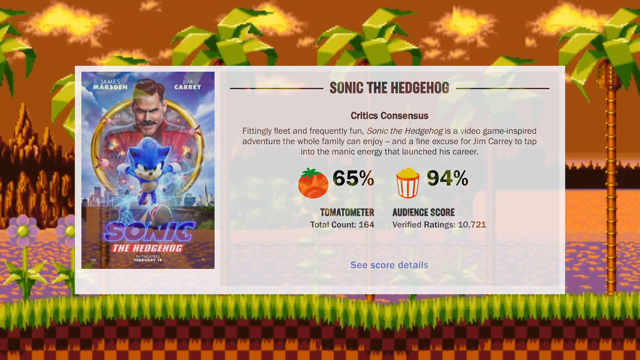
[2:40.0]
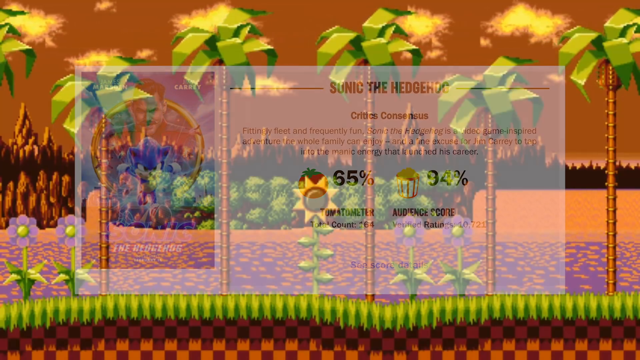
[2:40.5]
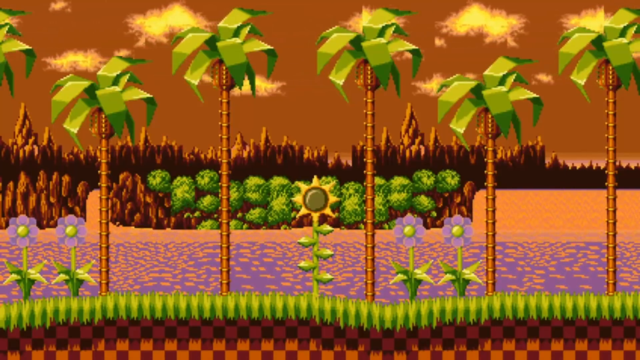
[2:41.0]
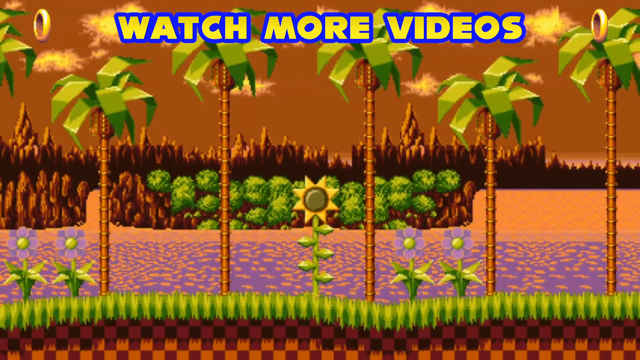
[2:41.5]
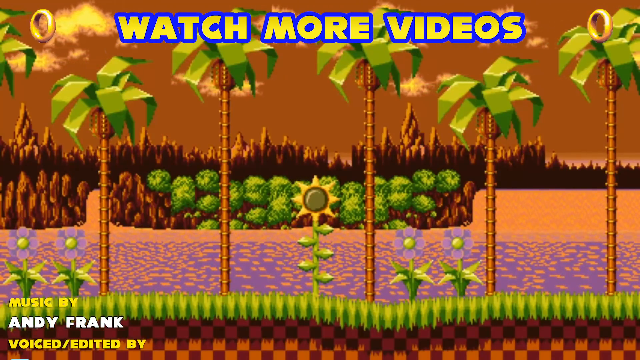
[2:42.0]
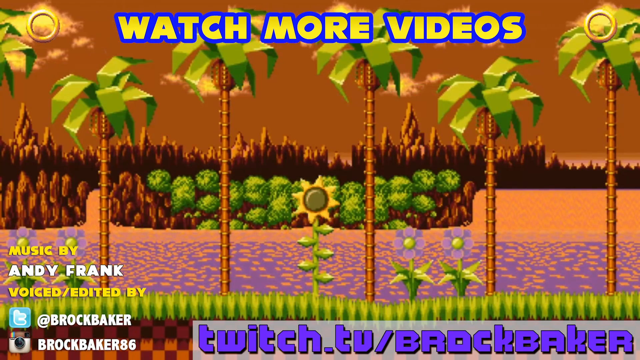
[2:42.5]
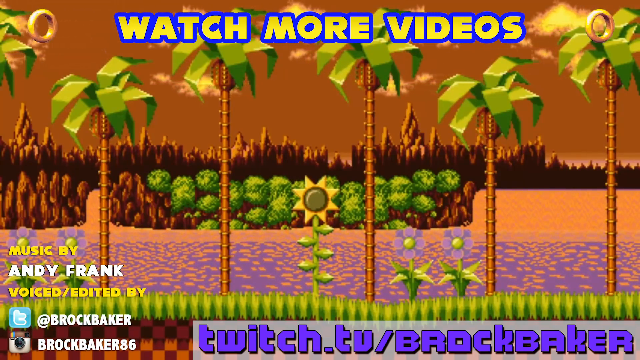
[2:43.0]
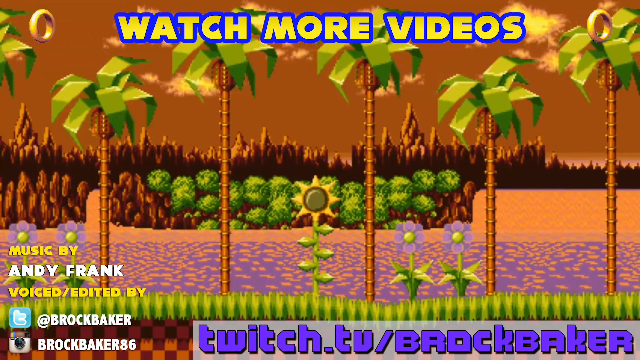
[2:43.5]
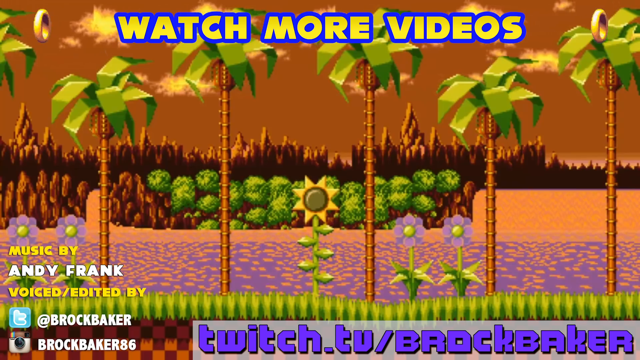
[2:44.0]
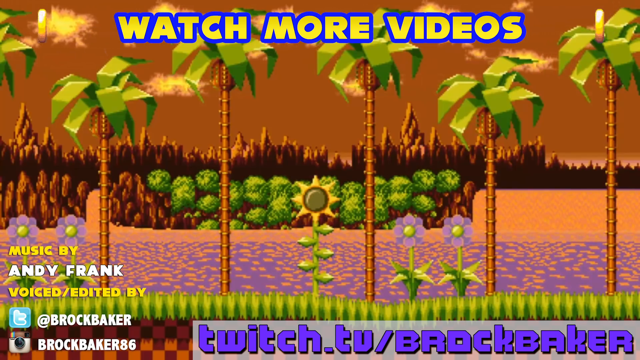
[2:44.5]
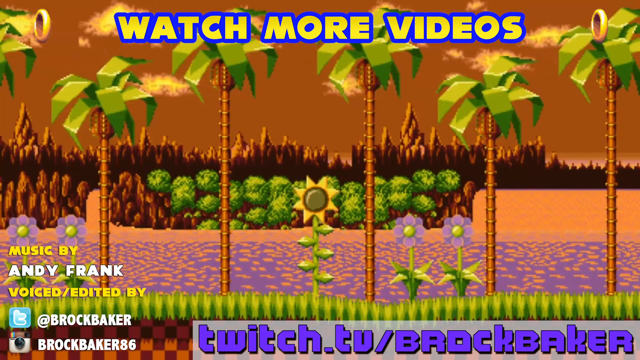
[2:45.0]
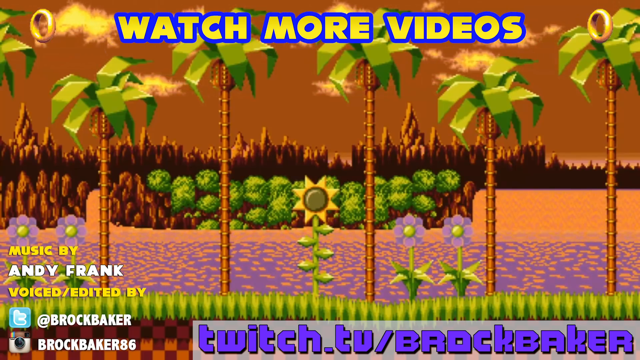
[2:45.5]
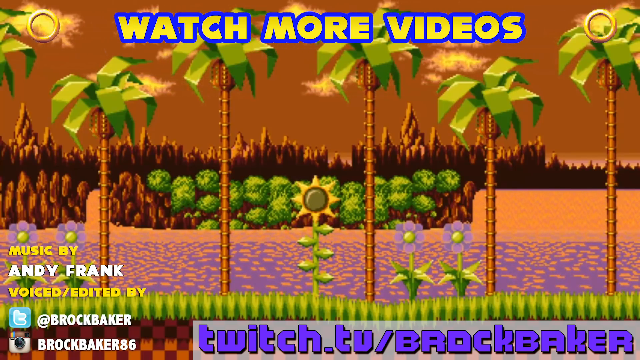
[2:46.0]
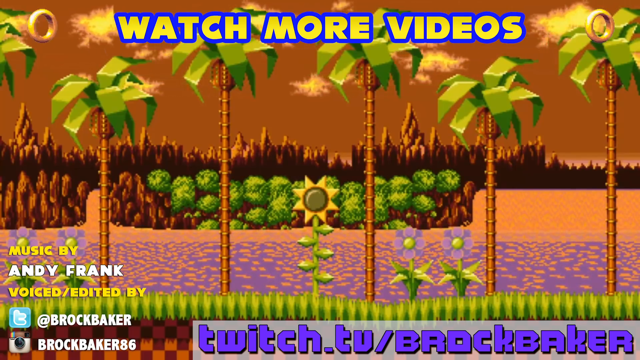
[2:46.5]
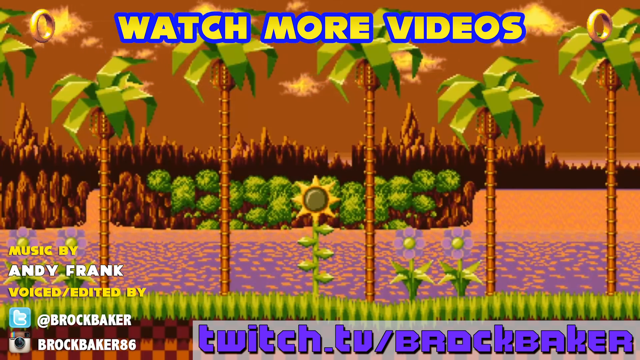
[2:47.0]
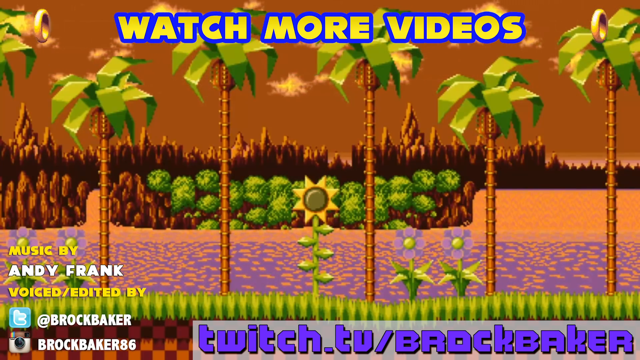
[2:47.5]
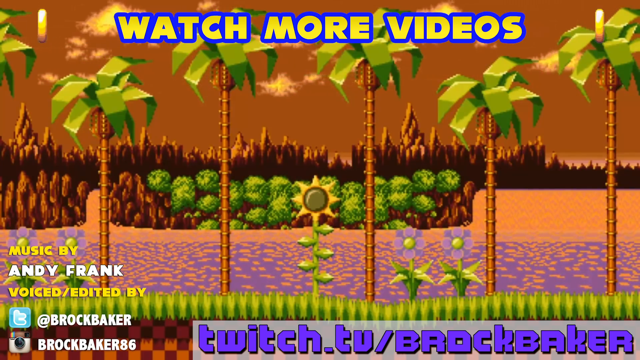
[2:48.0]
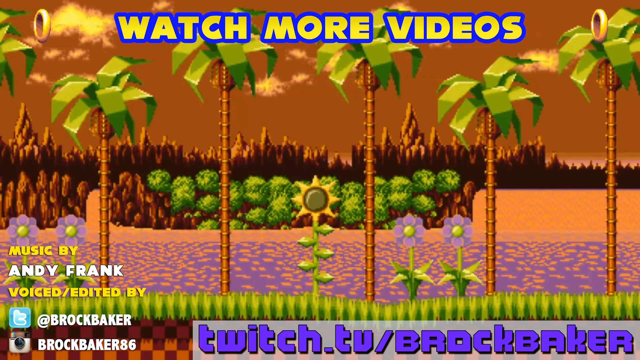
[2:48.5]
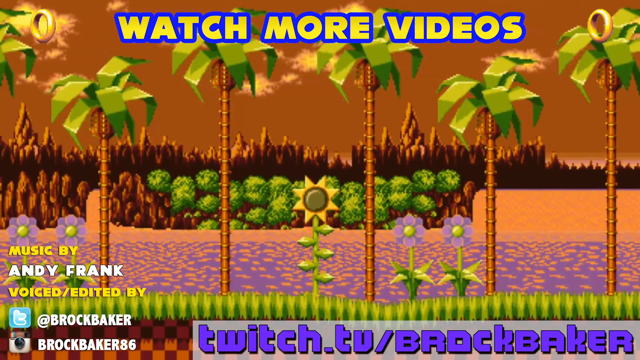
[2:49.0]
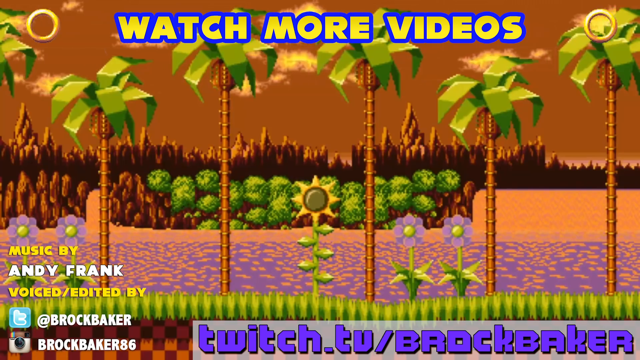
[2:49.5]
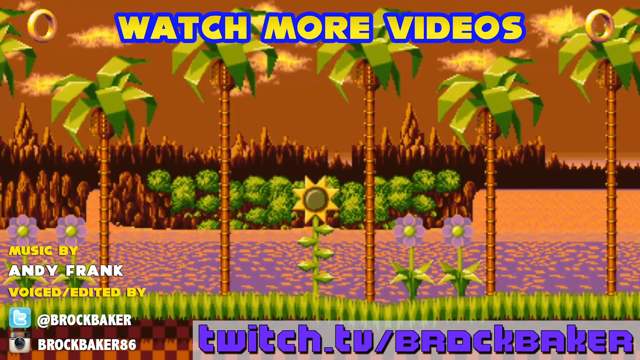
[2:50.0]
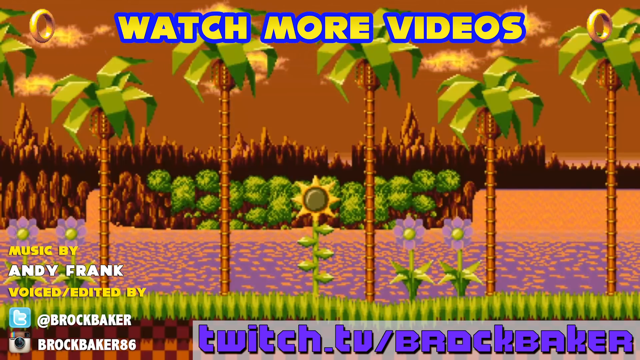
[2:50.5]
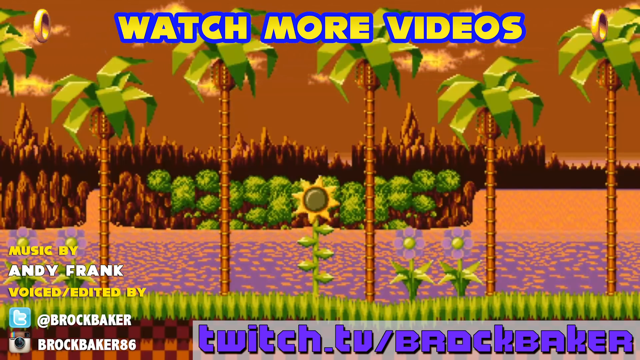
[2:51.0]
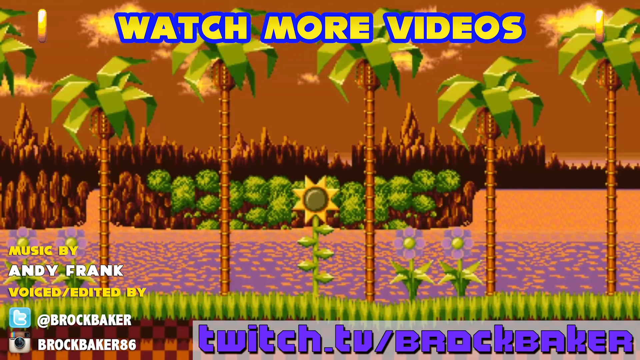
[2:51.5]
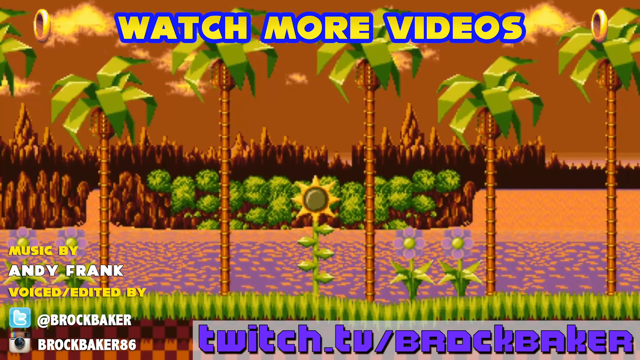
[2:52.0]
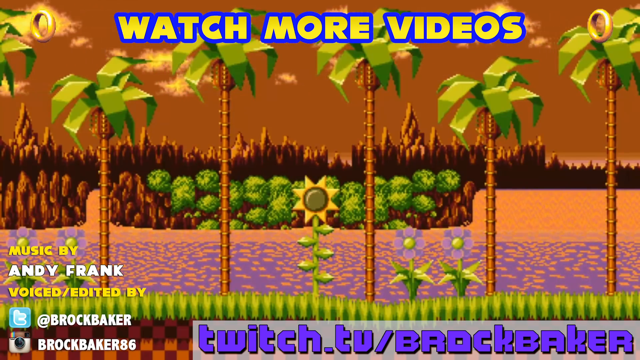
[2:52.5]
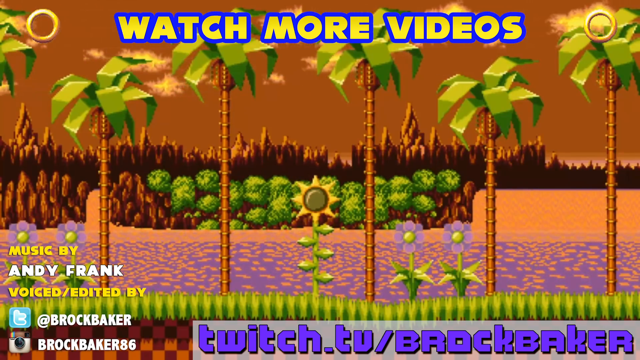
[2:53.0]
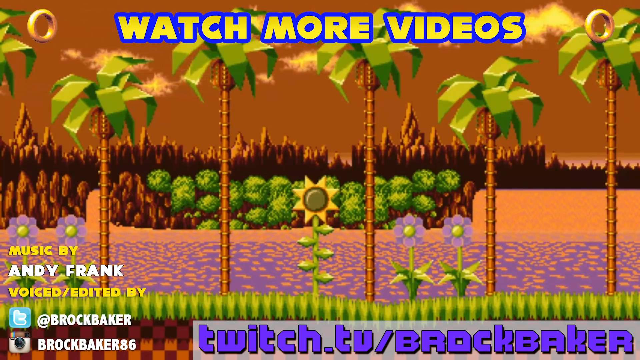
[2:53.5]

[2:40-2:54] The credits appear at the end of the video. Gold rings are on the screen again, over the pixelated image of a dawn scene with palm trees and sun-dappled waterways. The credits show that the music was made by Andy Frank and that the account that made the video is Brock Baker, with their Twitter and Twitch handles. There is a bit more low-tech animation on screen: a sunflower whose head is slightly rotating, some more purple flowers whose heads are rising and falling, and the gold rings spinning around.